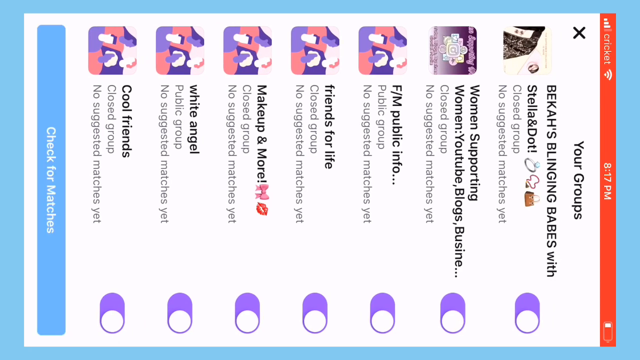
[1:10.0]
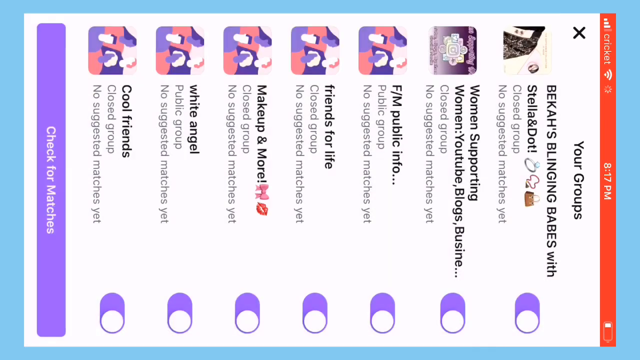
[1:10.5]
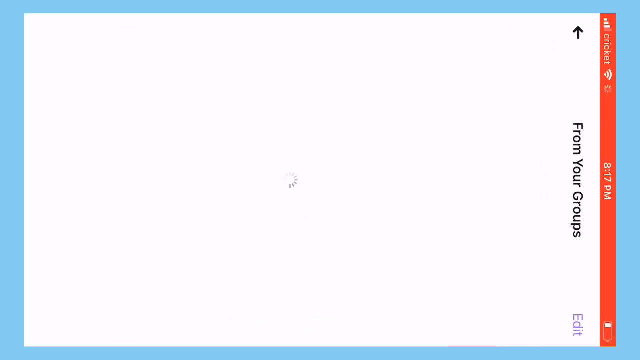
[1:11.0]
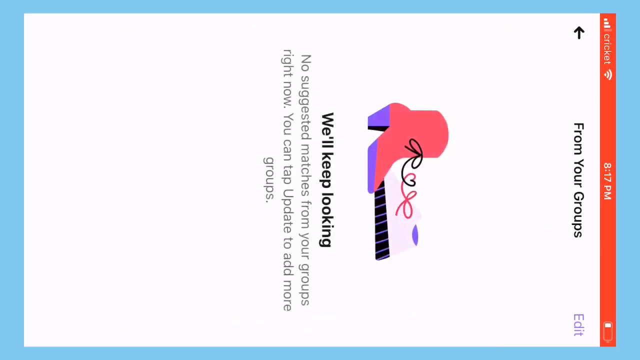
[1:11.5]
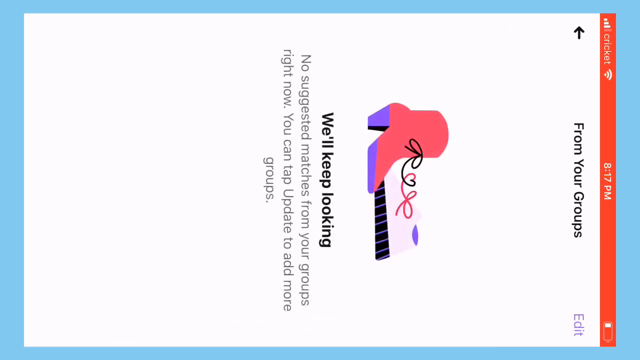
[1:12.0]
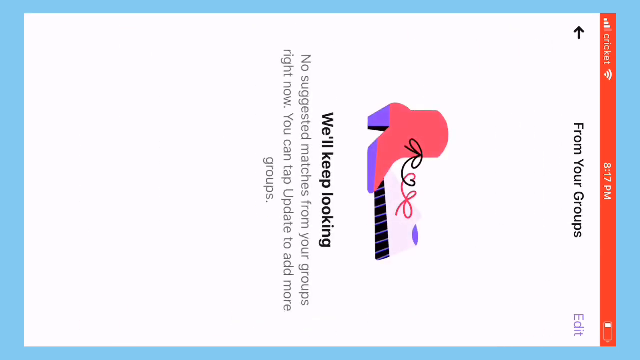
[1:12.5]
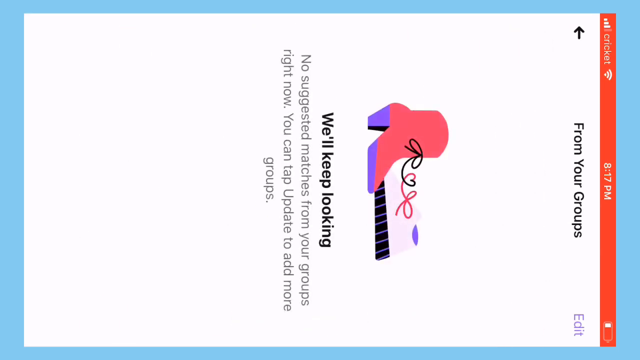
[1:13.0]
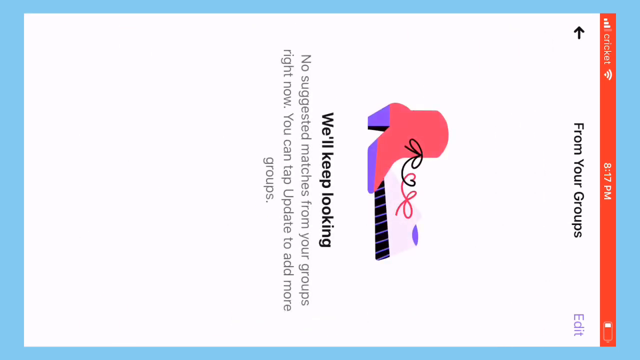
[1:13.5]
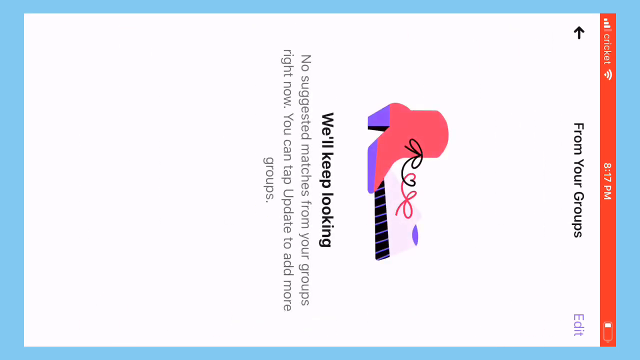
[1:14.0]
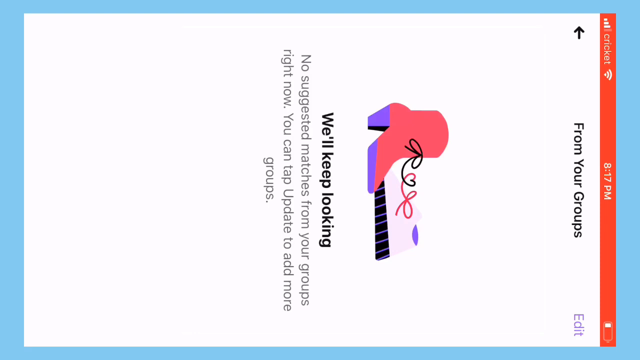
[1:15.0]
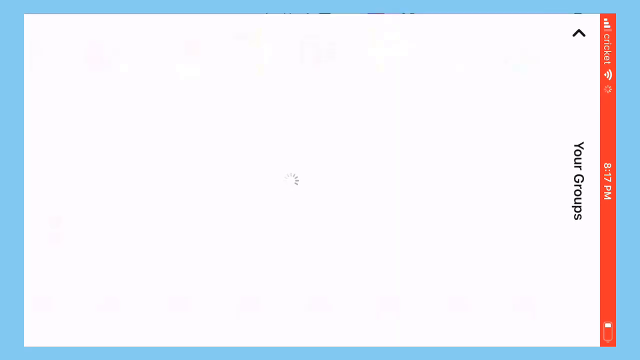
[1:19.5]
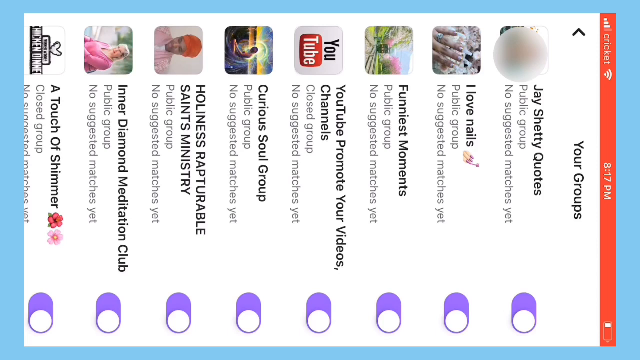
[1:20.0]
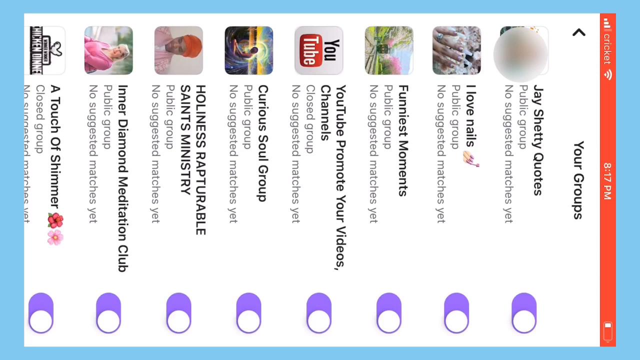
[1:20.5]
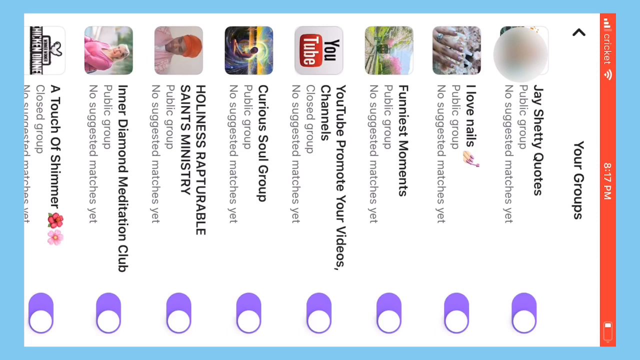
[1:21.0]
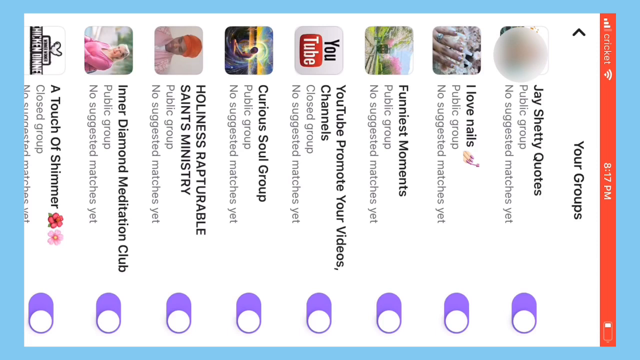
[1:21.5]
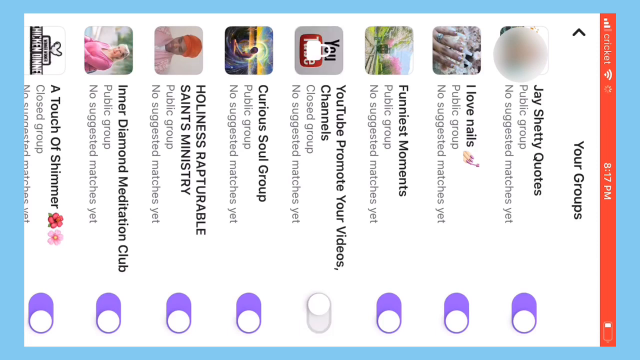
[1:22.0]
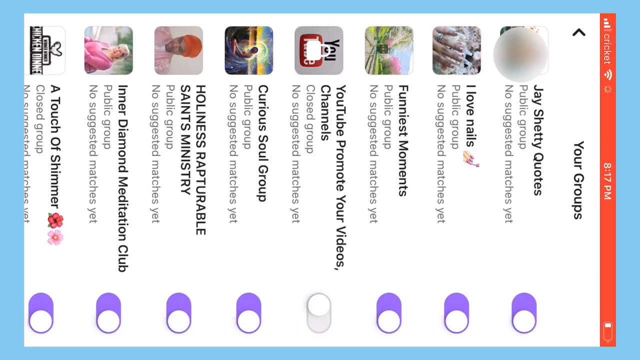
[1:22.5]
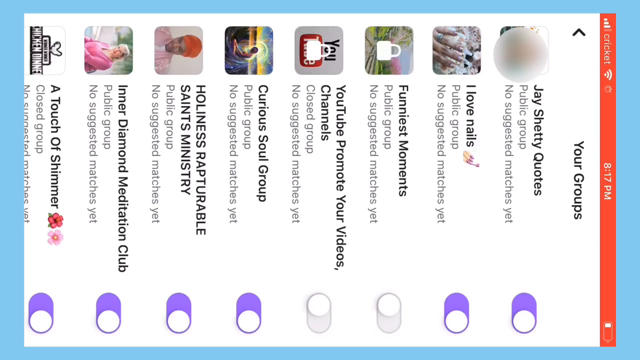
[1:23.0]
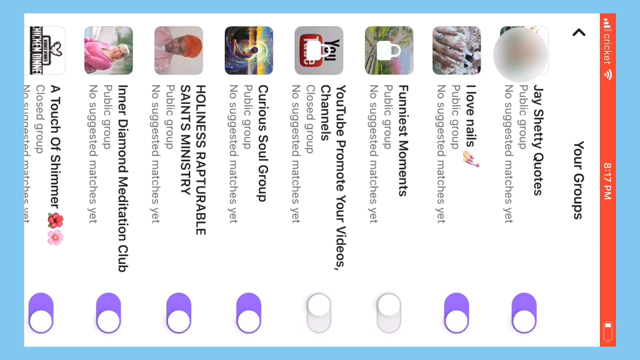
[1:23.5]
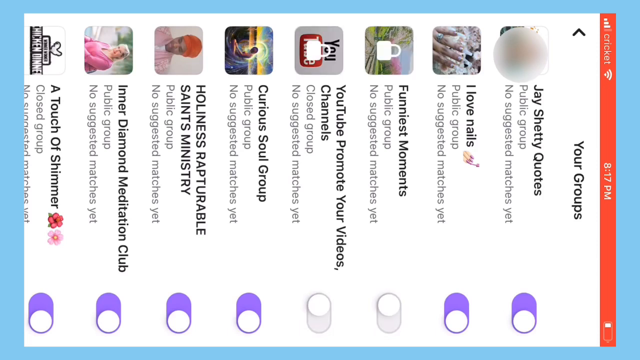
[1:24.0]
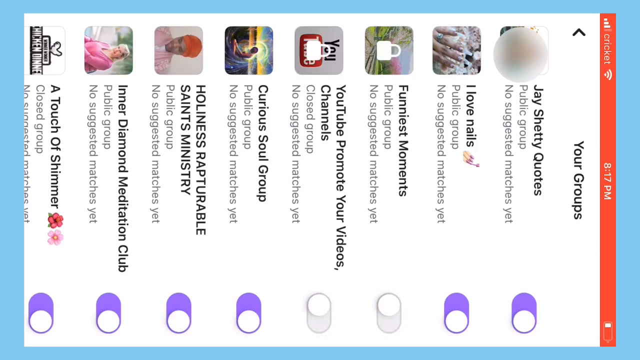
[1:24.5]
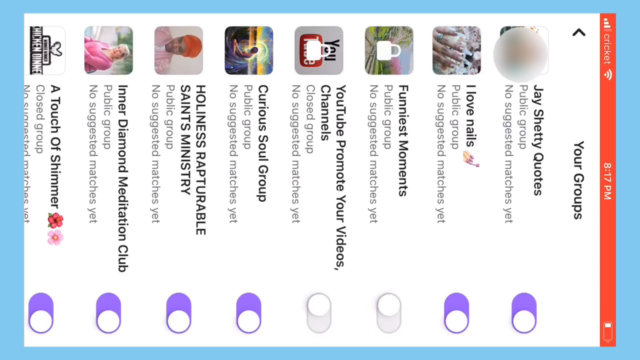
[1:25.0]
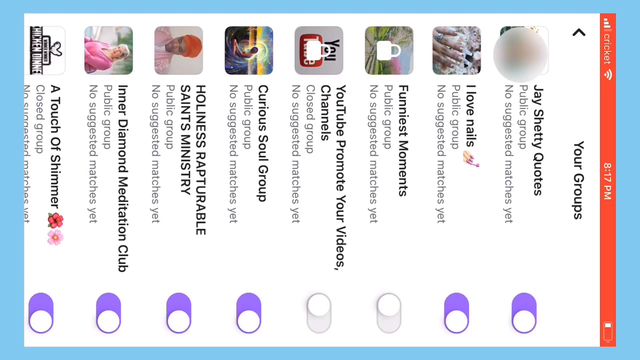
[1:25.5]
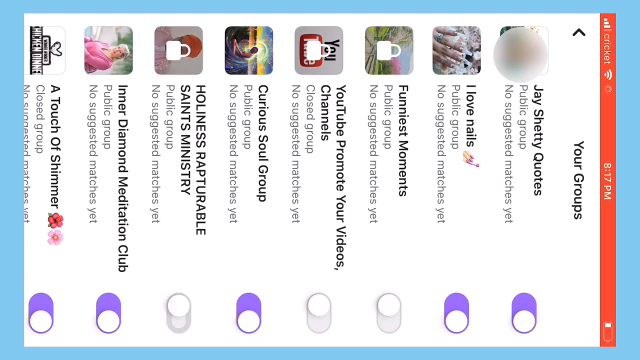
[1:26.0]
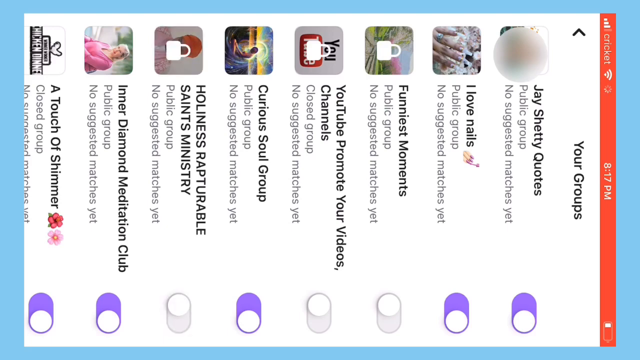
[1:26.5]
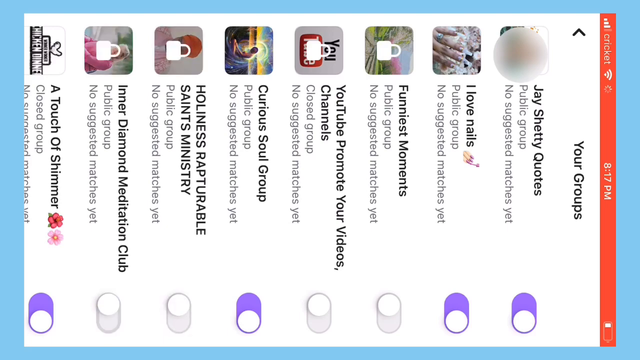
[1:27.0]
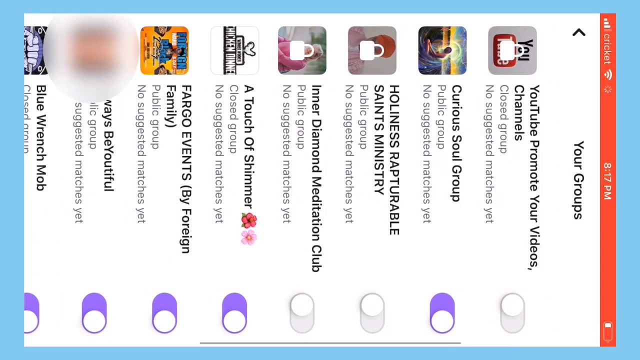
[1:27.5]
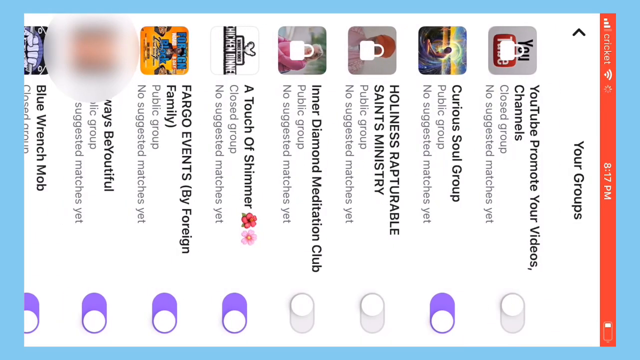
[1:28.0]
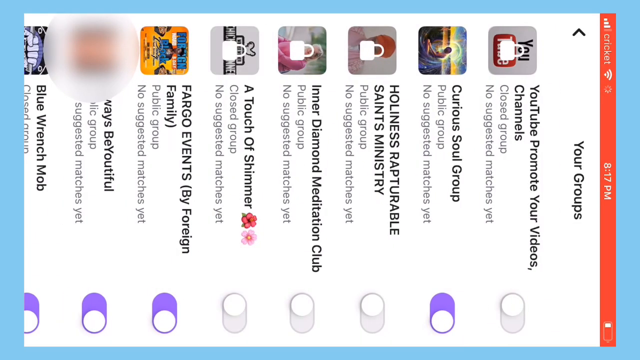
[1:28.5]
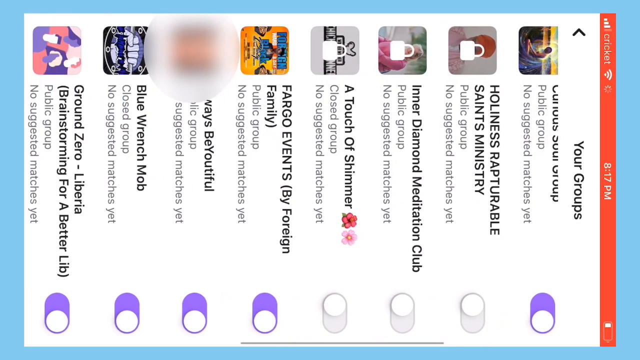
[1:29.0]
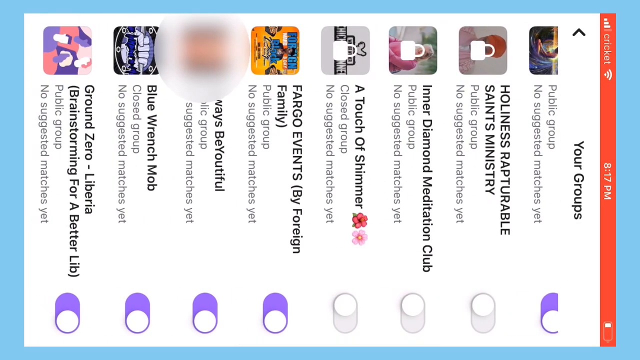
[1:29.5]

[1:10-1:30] A smartphone screen recorded in portrait mode is placed sideways to fit a landscape-mode desktop, showing a dating app in the center against a light blue background. The current screen reads "your groups" and lists multiple groups the person is part of, each with a toggle to its right, which appears at the bottom because of the sideways recording. The groups are "Becca's Blinging Babes with Stella and Dot," "Women Supporting Women," "YouTube Blogs," "FM Public Info," "Friends for Life," "Makeup and More," "White Angle," and "Cool Friends." The screen flashes upward, and a new screen reads "We'll keep looking, no suggested matches from your groups right now. You can tap update to add more groups." The screen then swipes upward, appearing as rightward on the phone screen, and shows more groups the person is part of.